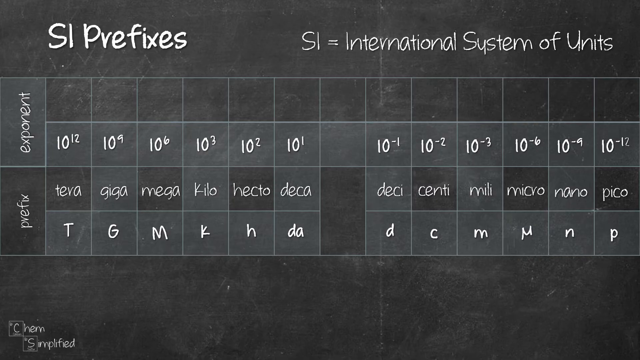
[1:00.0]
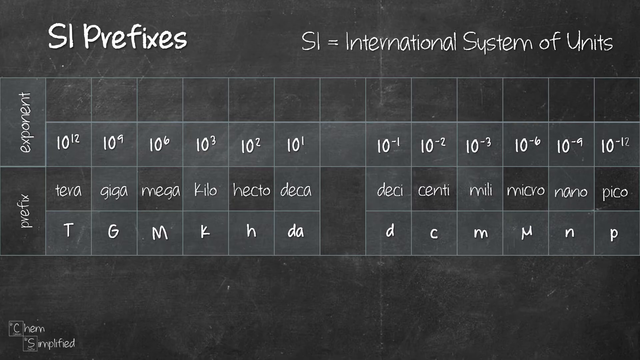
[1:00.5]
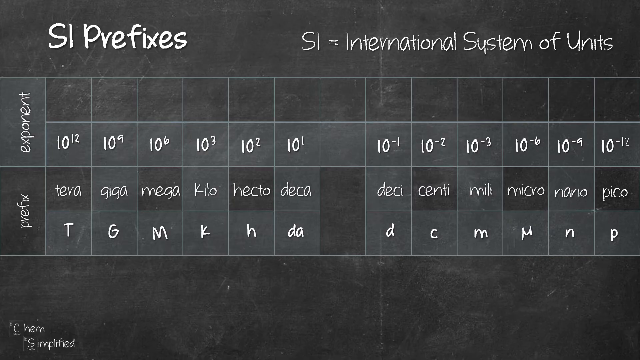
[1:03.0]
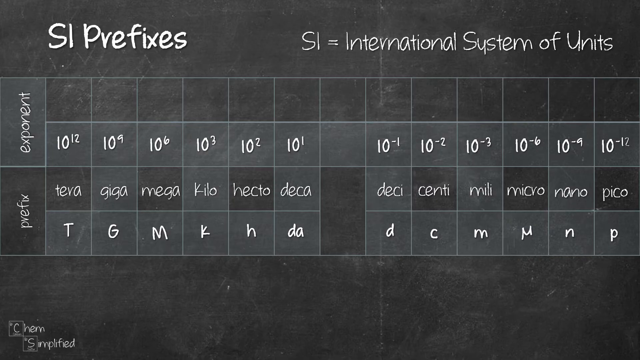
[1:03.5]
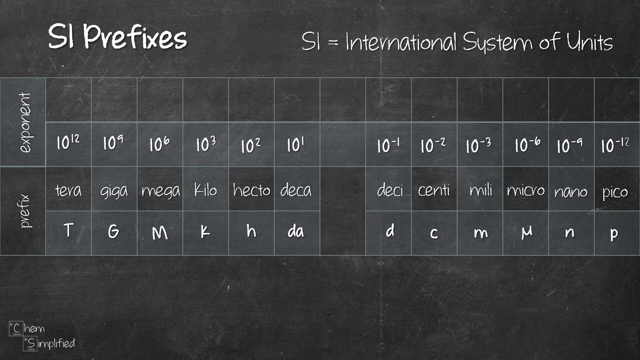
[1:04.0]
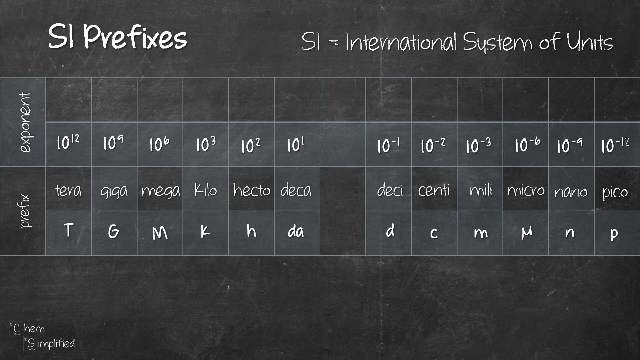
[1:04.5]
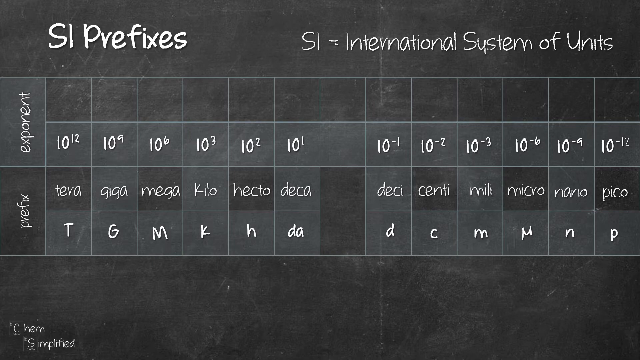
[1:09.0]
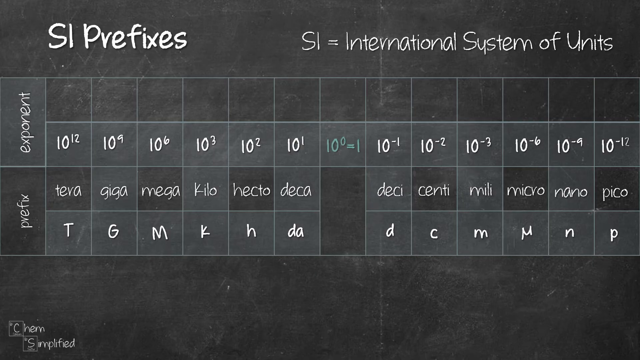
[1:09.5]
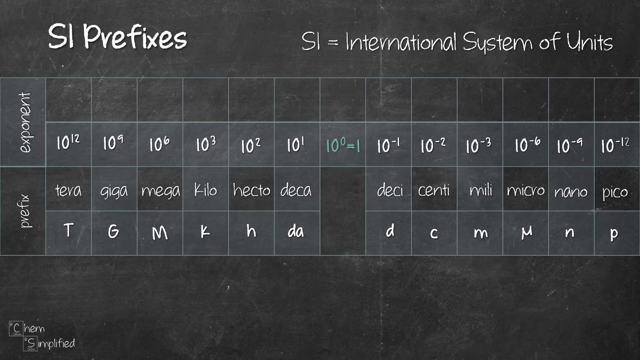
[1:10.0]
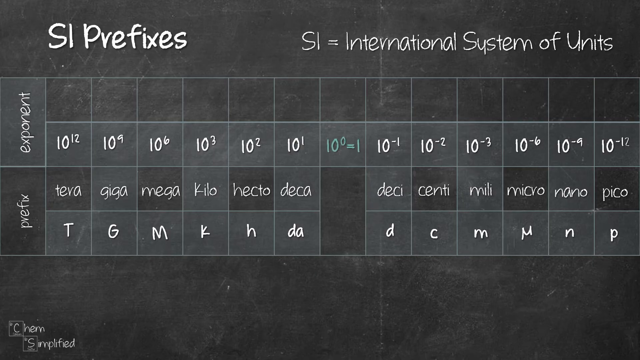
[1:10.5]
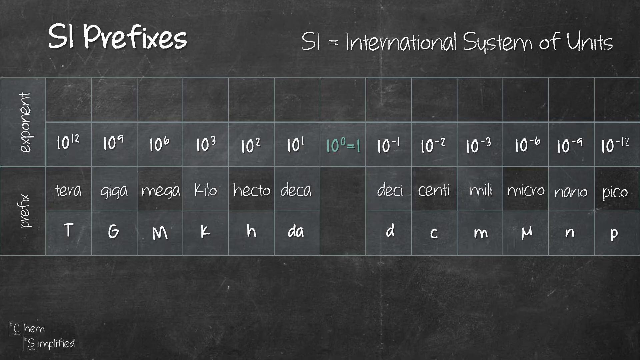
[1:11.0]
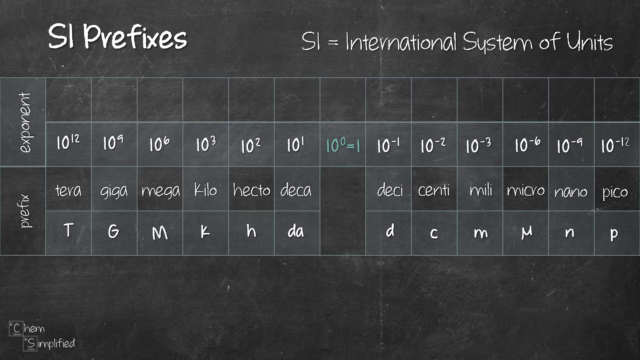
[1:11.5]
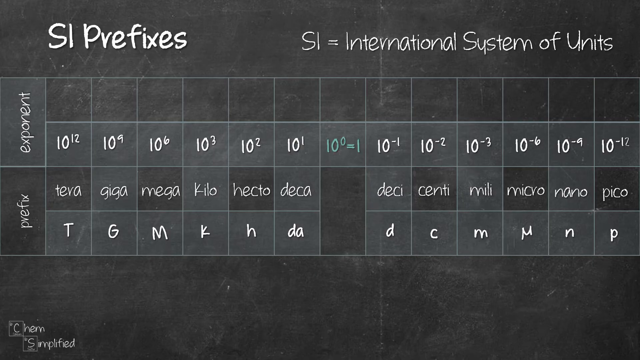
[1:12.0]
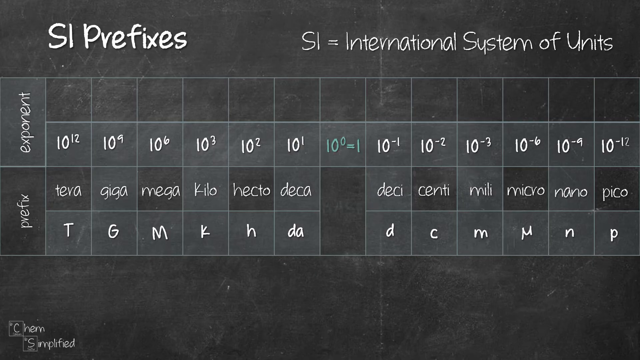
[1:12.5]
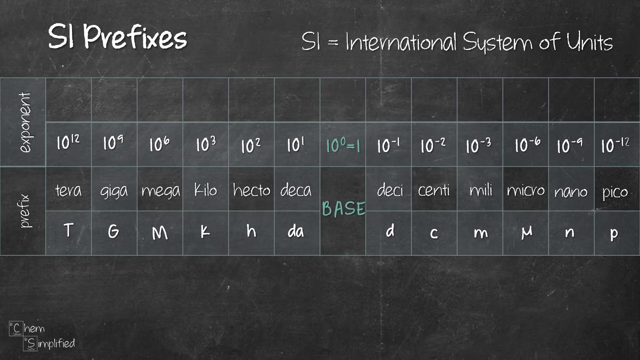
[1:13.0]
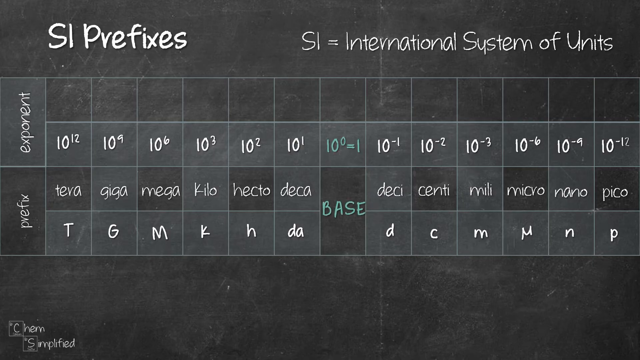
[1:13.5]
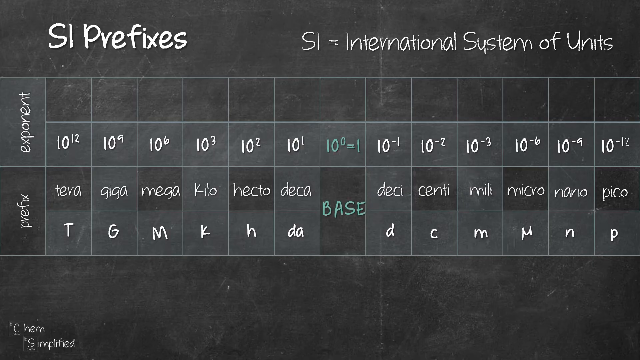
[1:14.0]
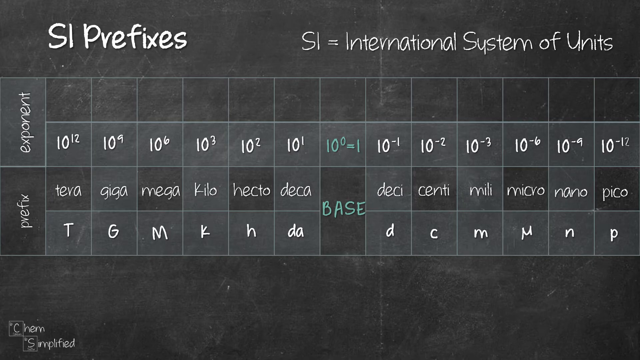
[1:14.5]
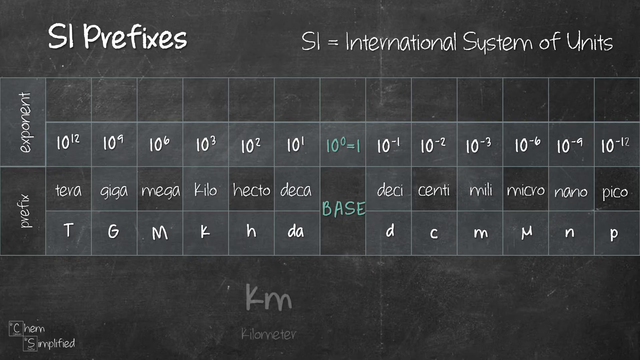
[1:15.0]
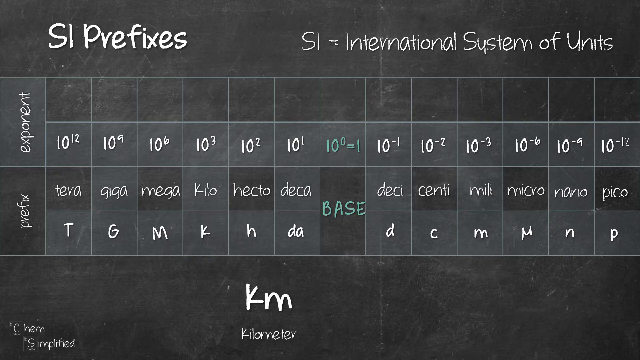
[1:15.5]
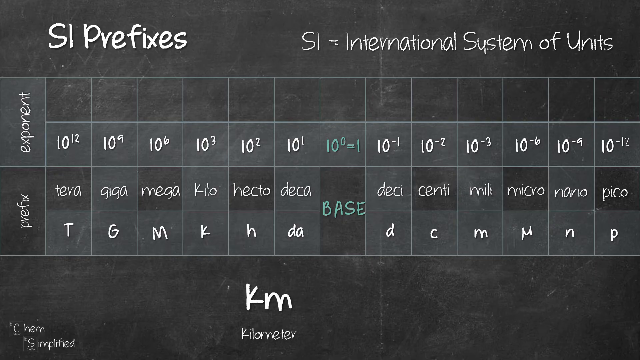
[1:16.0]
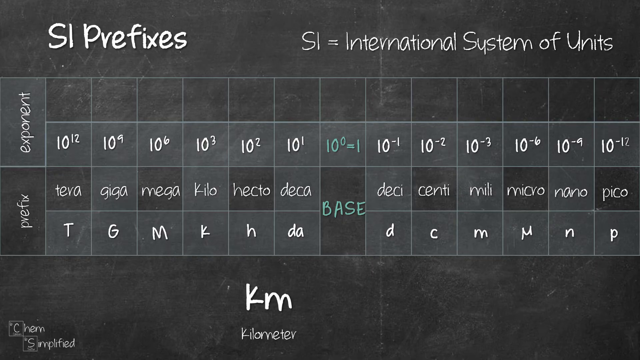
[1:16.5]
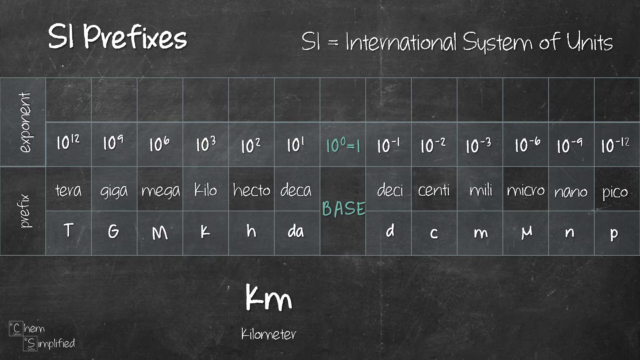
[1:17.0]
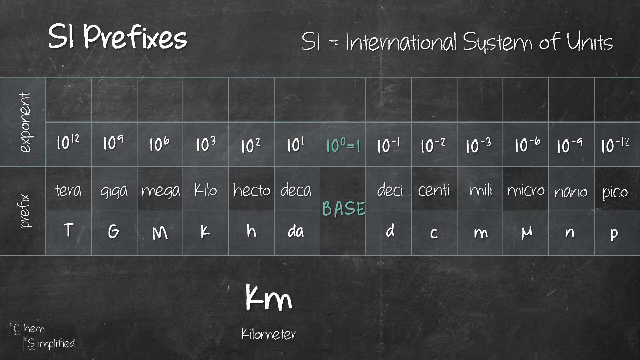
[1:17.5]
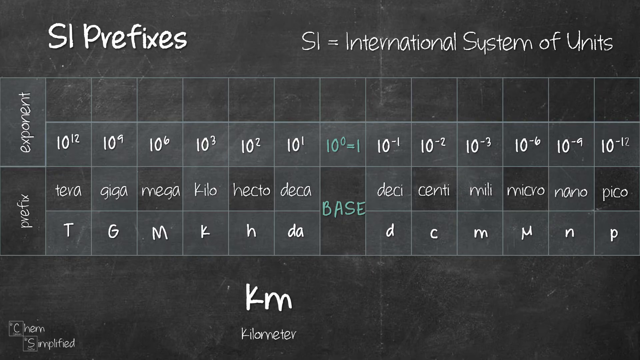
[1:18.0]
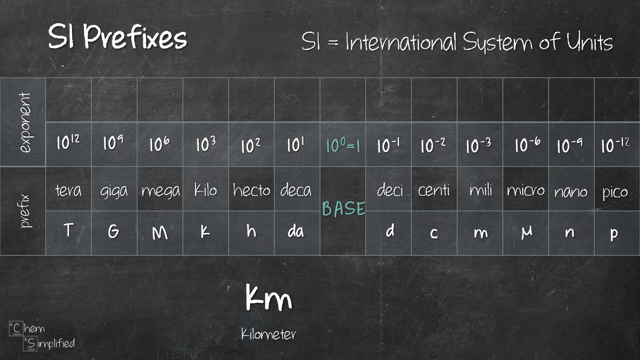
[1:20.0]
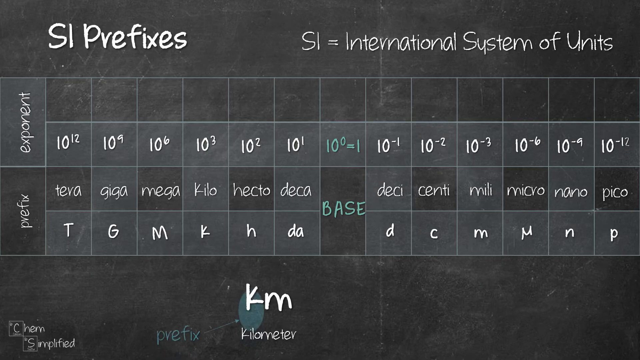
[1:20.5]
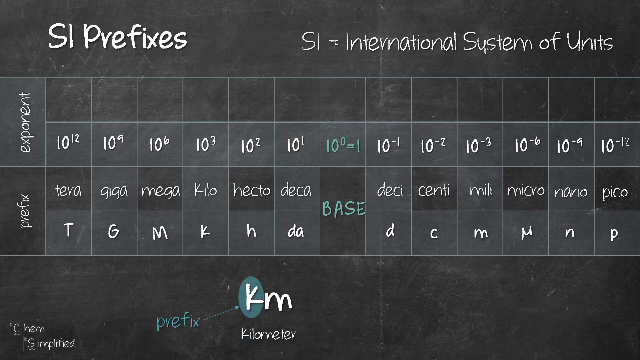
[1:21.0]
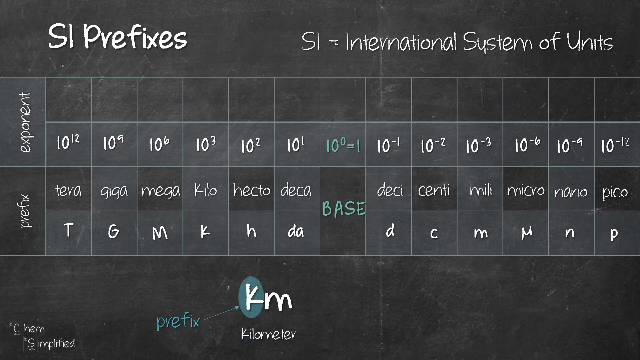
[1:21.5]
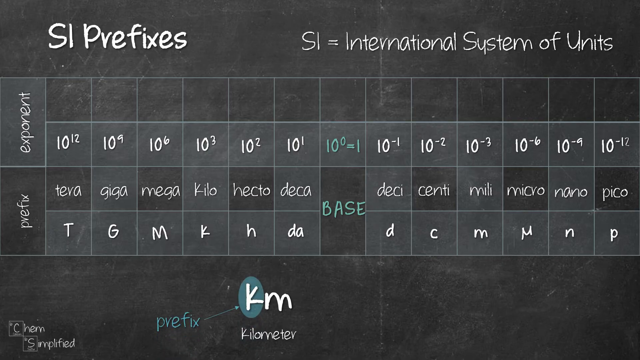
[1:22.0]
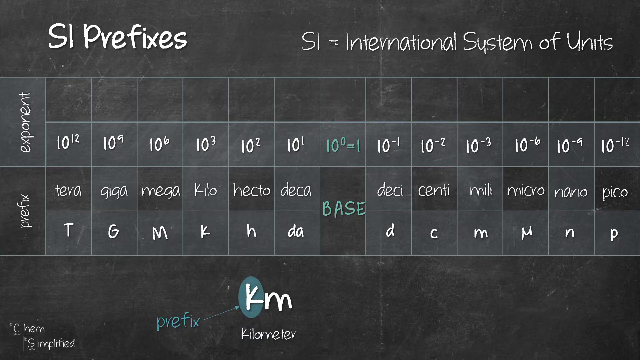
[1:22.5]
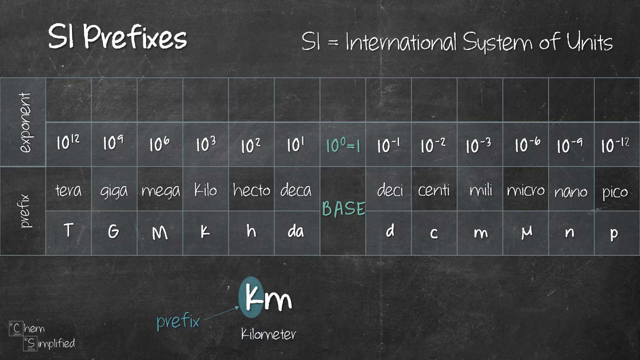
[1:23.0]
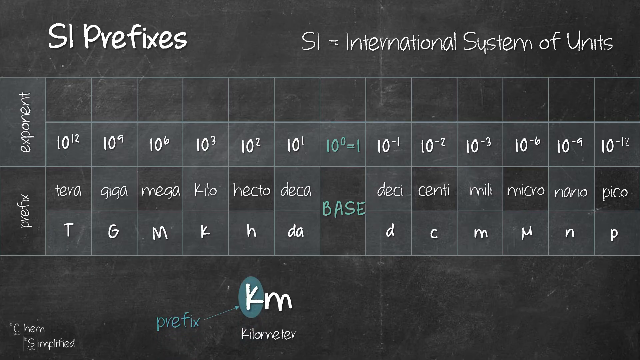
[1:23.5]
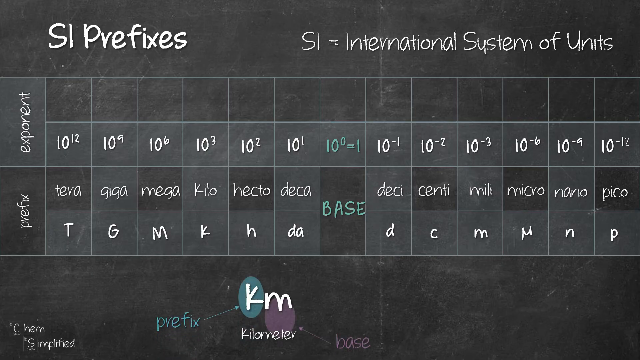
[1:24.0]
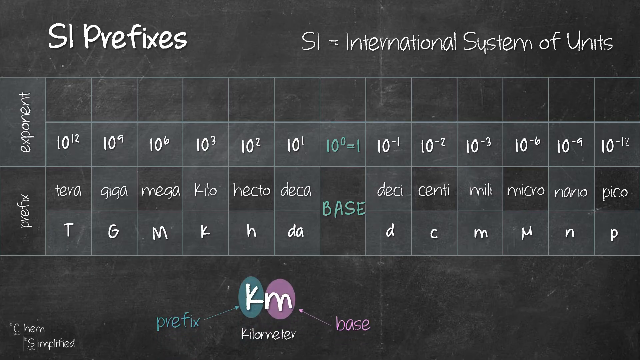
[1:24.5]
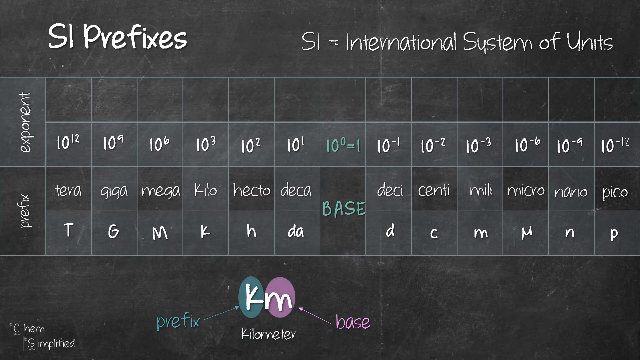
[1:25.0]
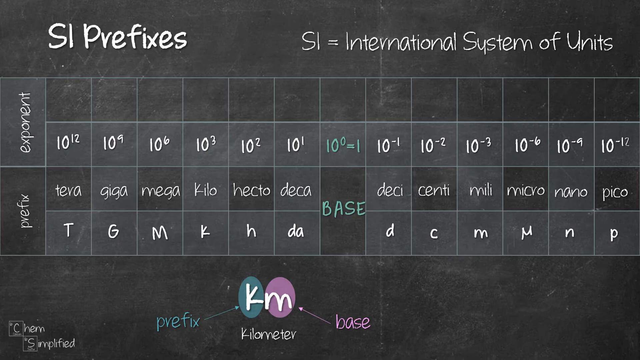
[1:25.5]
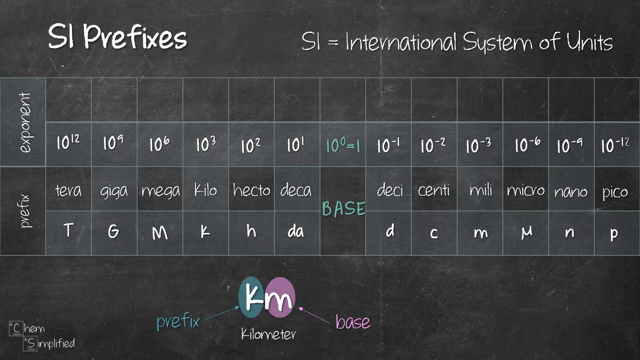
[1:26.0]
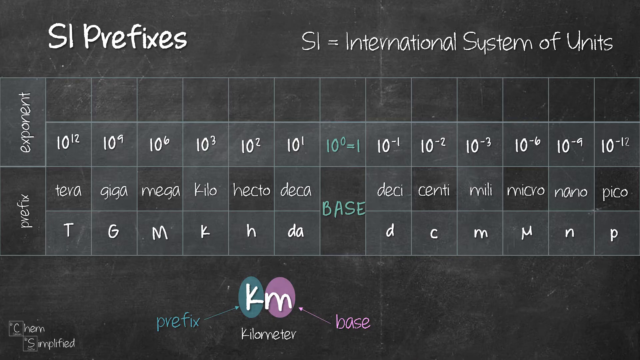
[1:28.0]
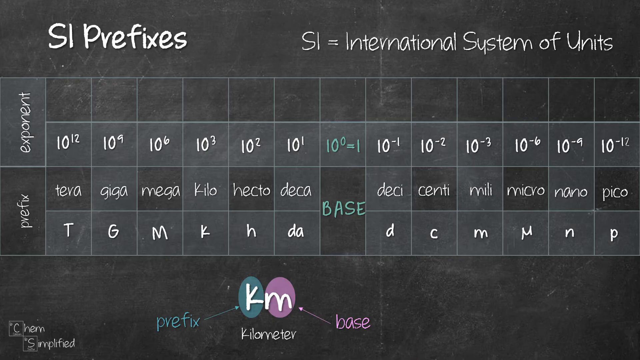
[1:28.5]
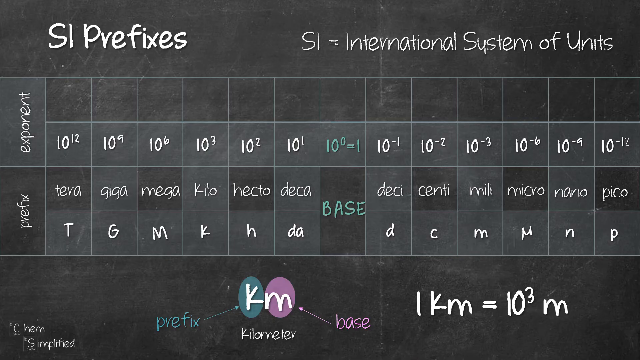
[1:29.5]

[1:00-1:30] The background is a dark gray blackboard with many white-ish smudges and a lot of erased writing. Computer-generated text over it covers SI prefixes, the International System of Units. A grid shows how the prefixes compare to their exponents, with exponents in the top bar and prefixes in the bottom bar. The prefixes are tera, giga, mega, kilo, hecto, deca, deci, centi, milli, micro, nano and pico, abbreviated in the prefix box as T, G, M, K, H, da, d, c, m, a Greek M, n and p. The exponents box above is now filled in: 10 to the 12th above tera, 10 to the 9th above giga, 10 to the 6th above mega, 10 to the 3rd above kilo, 10 to the 2nd above hecto and 10 to the 1st above deca. The empty box is filled in on the exponent row with 10 to the zero equals 1. Then come 10 to the negative 1 above deci, 10 to the negative 2 above centi, 10 to the negative 3 above milli, 10 to the negative 6 above micro, 10 to the negative 9 above nano and 10 to the negative 12 above pico.